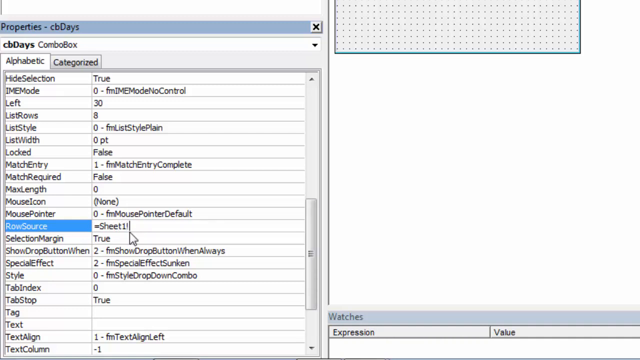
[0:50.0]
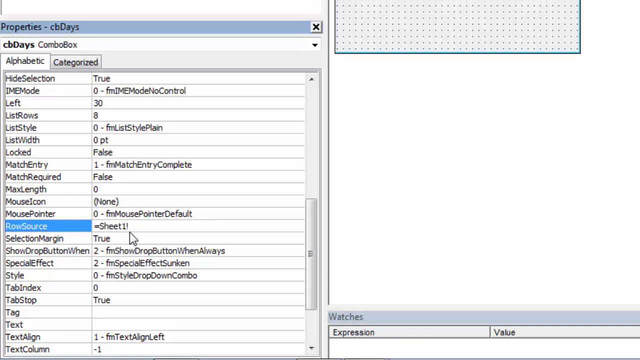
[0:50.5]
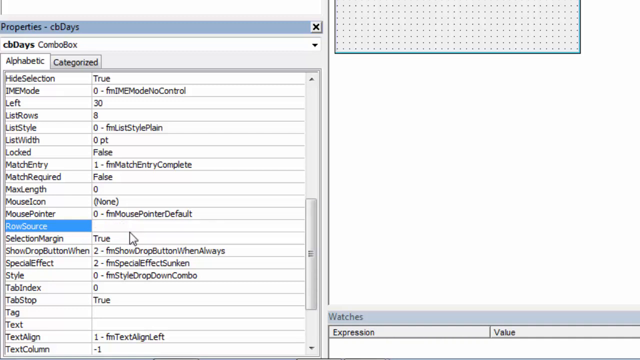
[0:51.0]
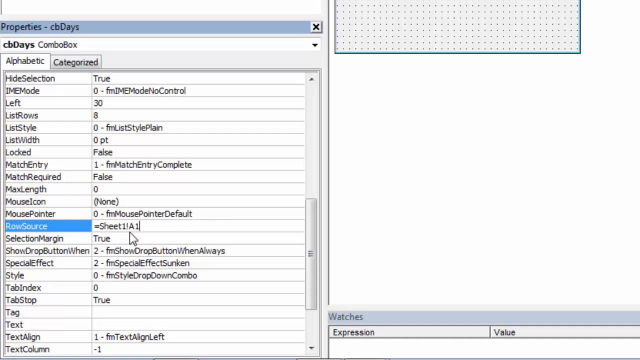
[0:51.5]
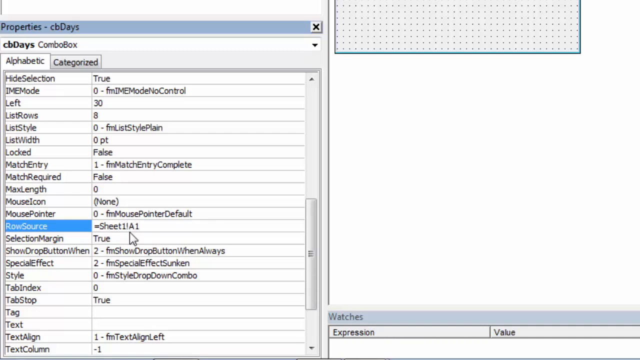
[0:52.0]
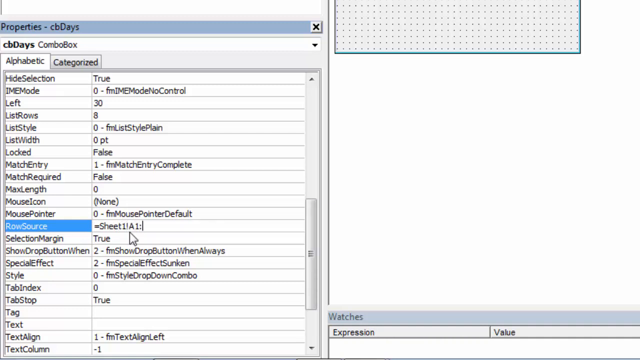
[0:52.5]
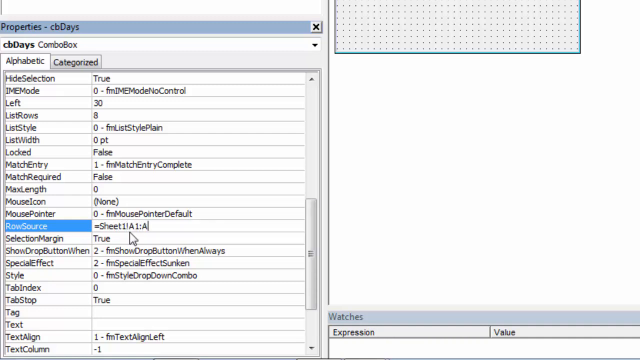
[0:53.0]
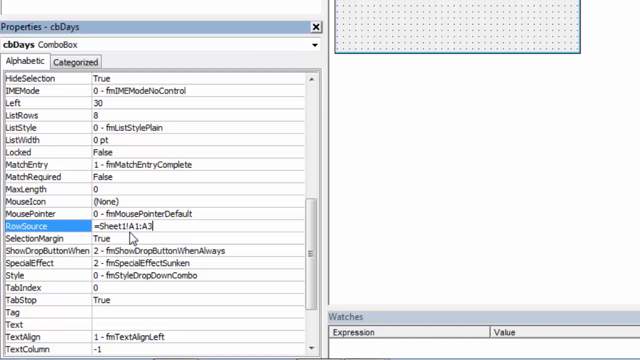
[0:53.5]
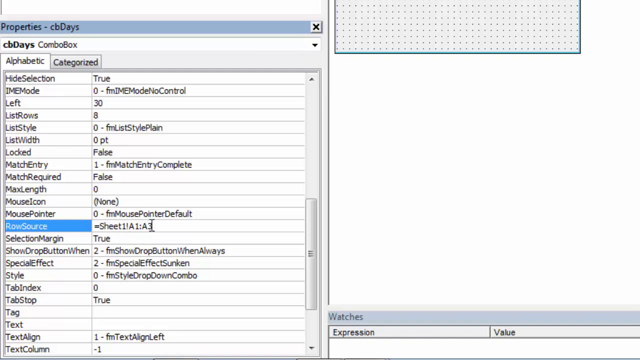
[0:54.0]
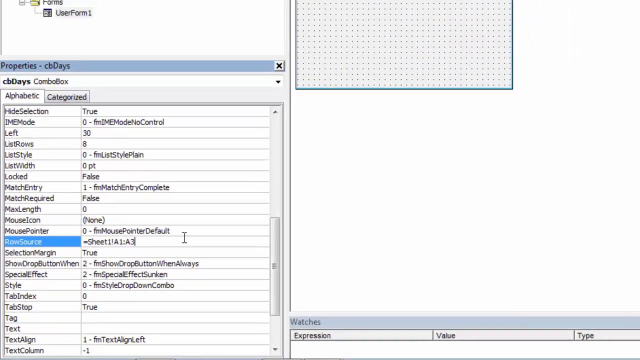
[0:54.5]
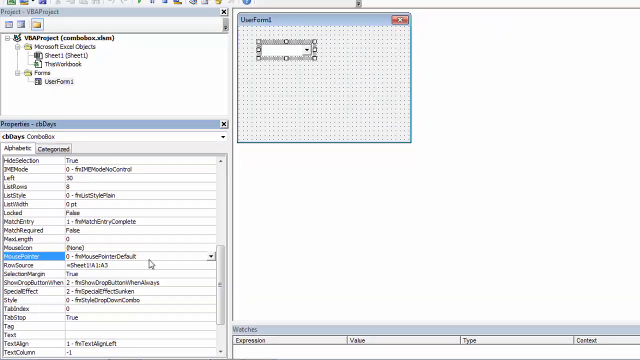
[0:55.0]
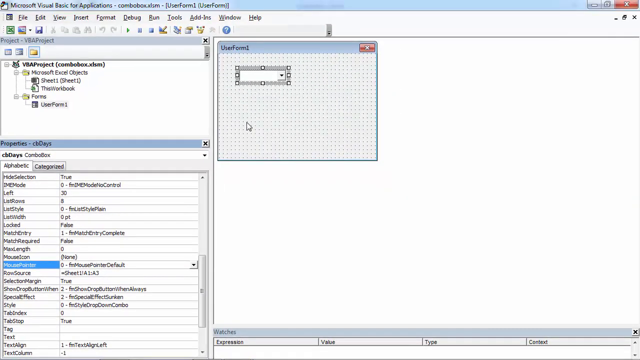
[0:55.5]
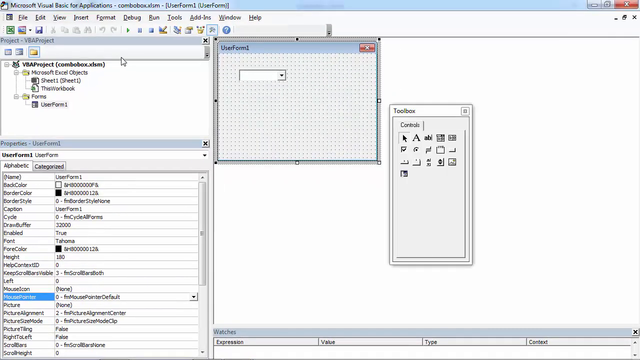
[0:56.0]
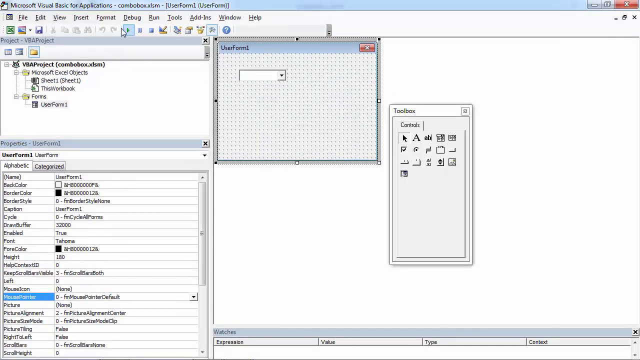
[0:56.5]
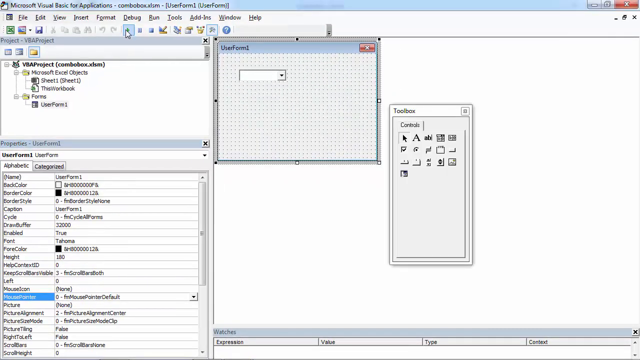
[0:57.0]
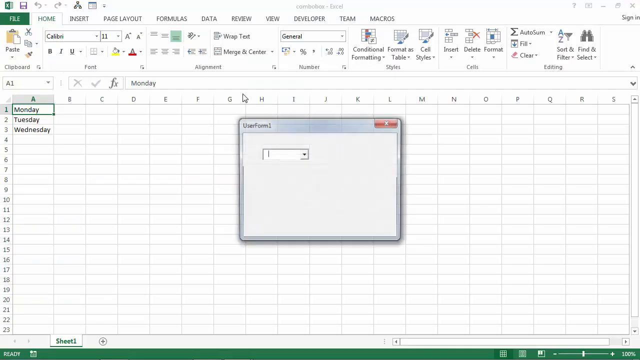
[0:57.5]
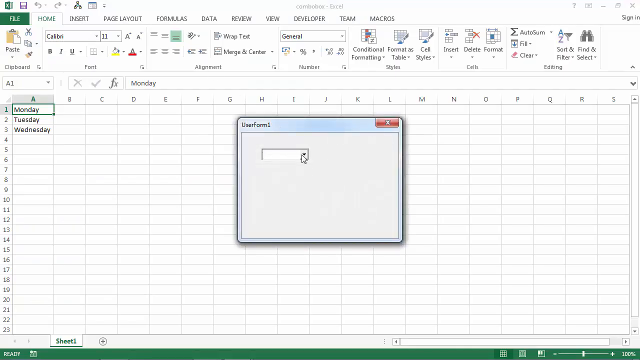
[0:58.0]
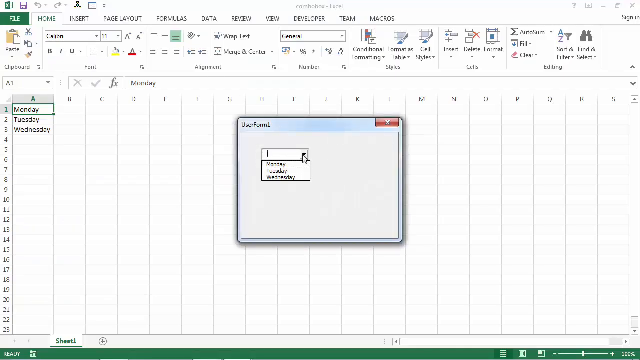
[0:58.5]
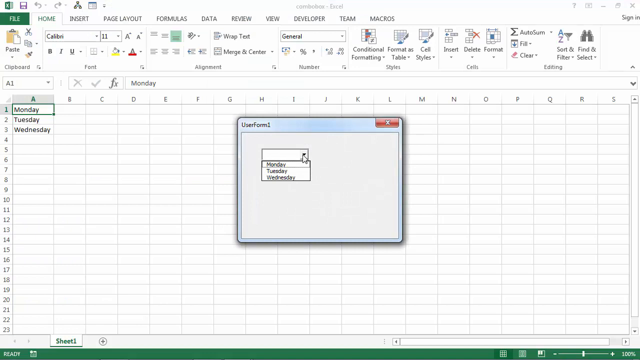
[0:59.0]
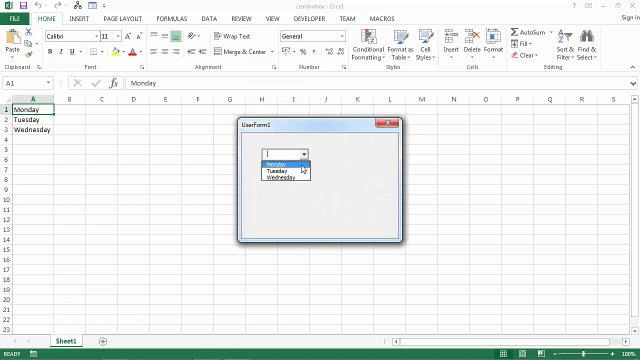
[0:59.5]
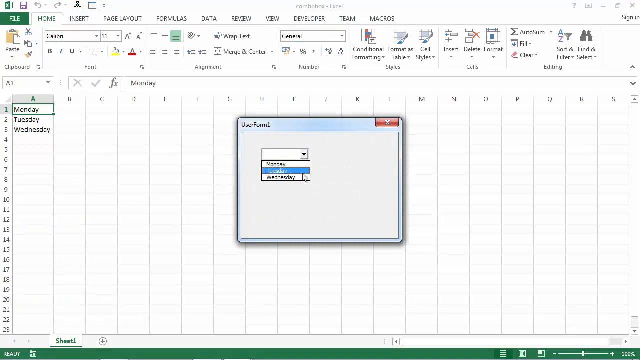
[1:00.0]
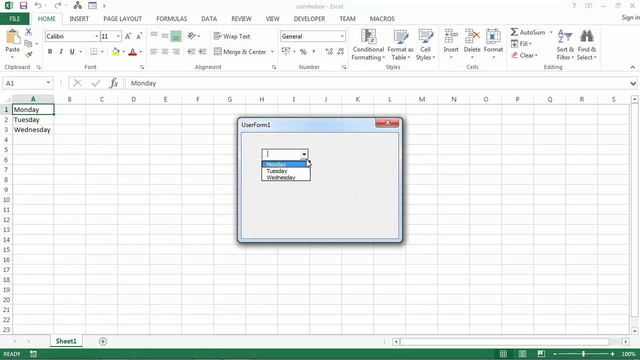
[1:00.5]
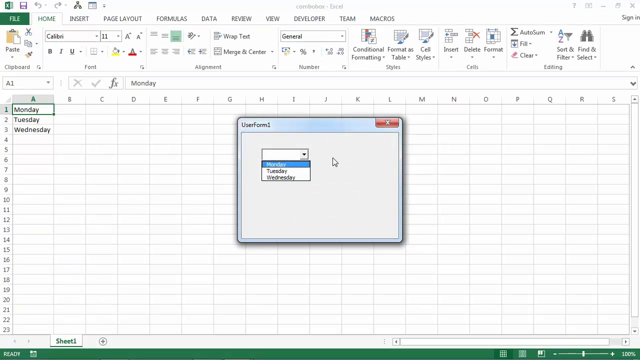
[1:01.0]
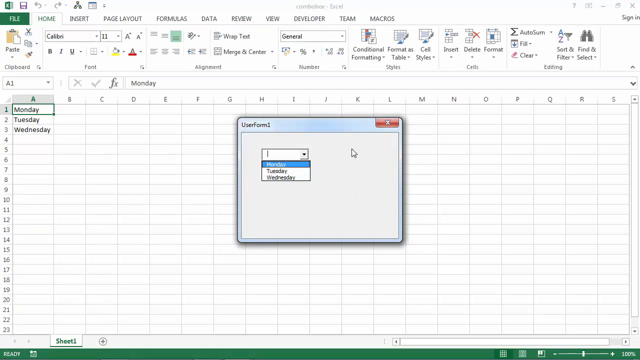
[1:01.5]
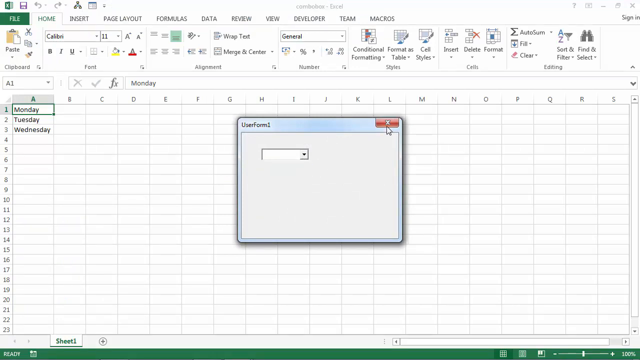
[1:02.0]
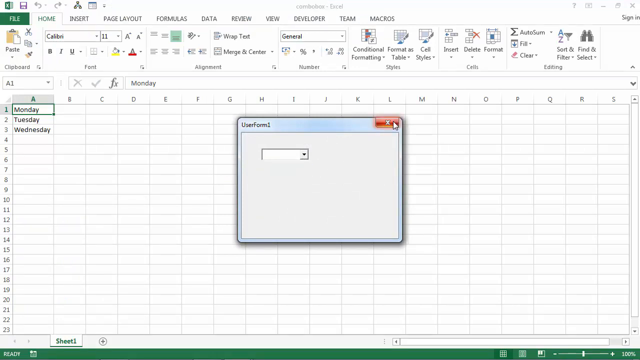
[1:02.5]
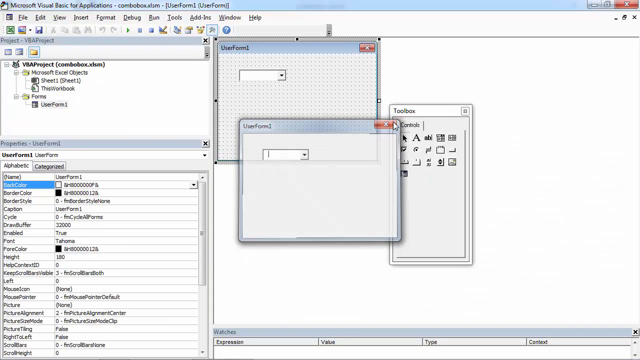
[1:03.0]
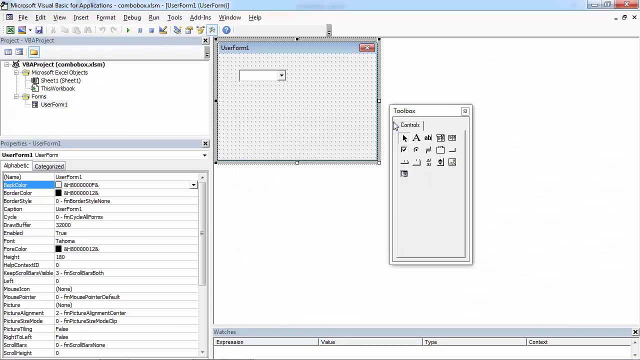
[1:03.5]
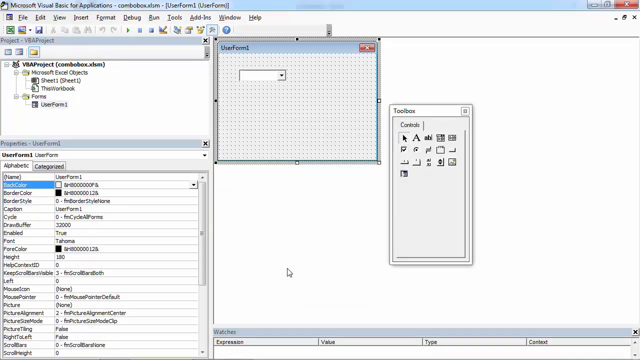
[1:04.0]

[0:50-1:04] The user is still working in Excel. After he has input the formula, a user1 form appears displaying Monday, Tuesday, Wednesday, and then it closes at the end of the video. The video is probably teaching how to use Microsoft Excel.